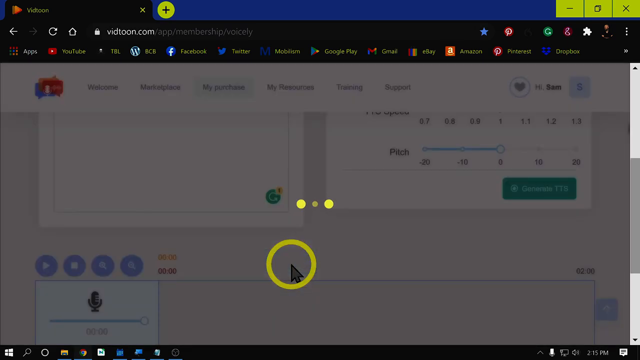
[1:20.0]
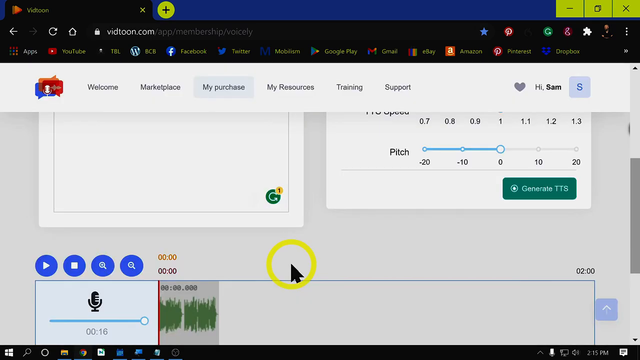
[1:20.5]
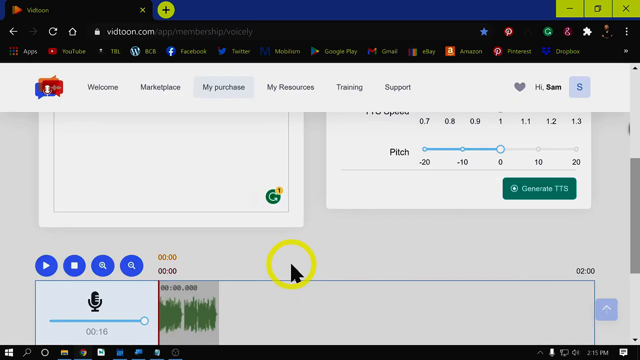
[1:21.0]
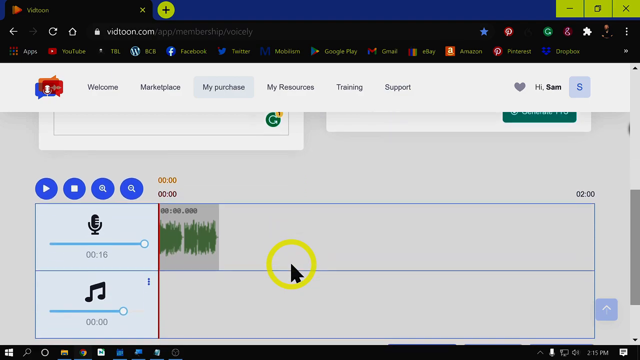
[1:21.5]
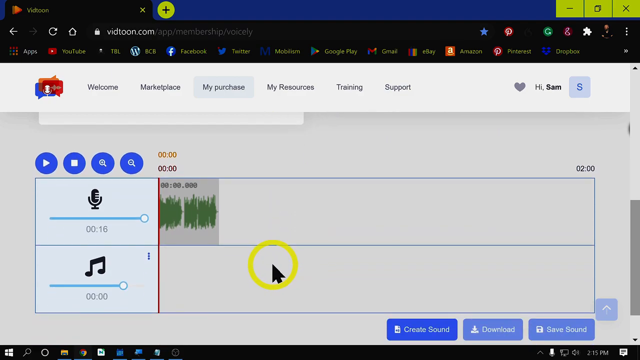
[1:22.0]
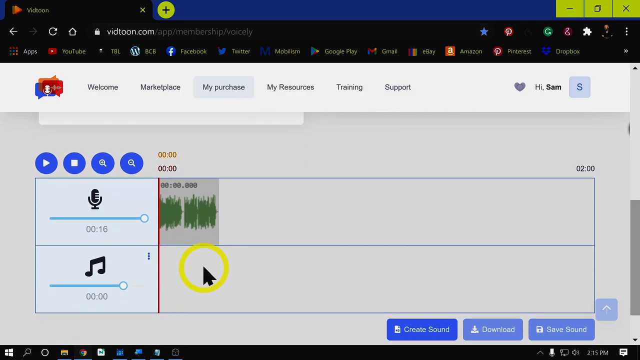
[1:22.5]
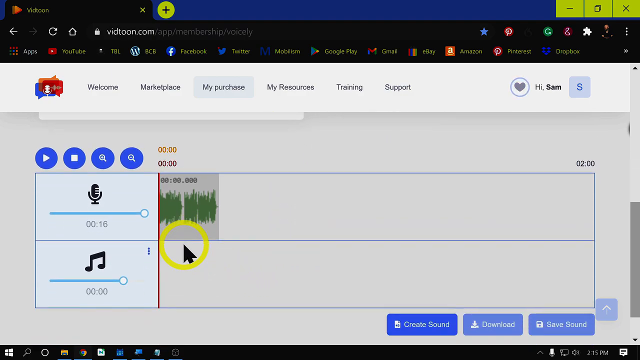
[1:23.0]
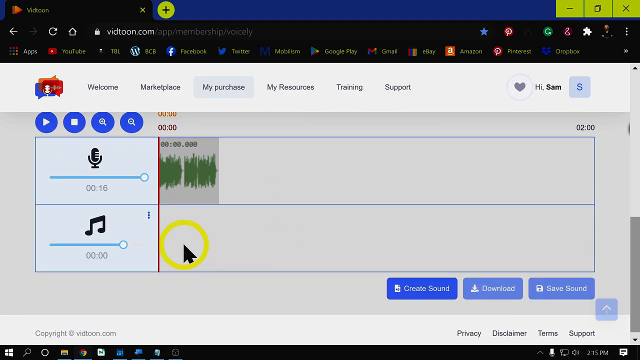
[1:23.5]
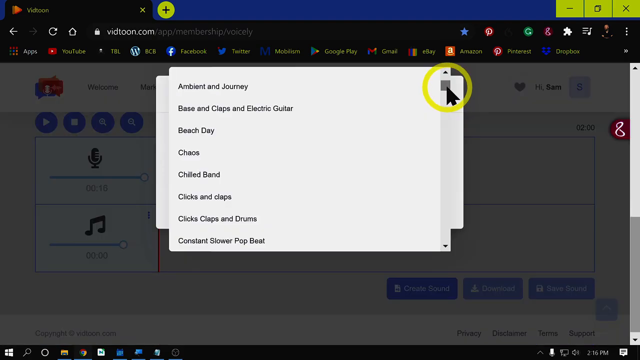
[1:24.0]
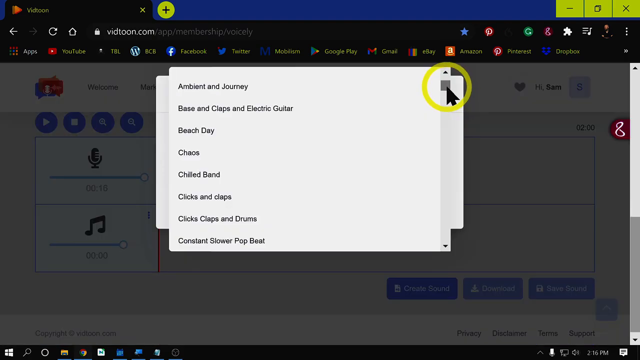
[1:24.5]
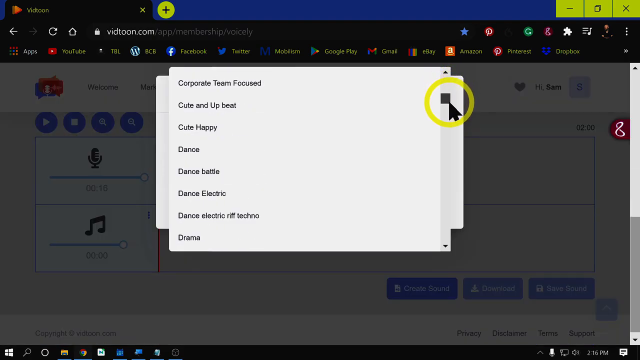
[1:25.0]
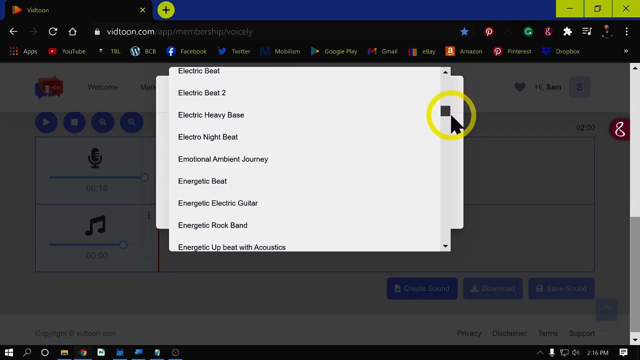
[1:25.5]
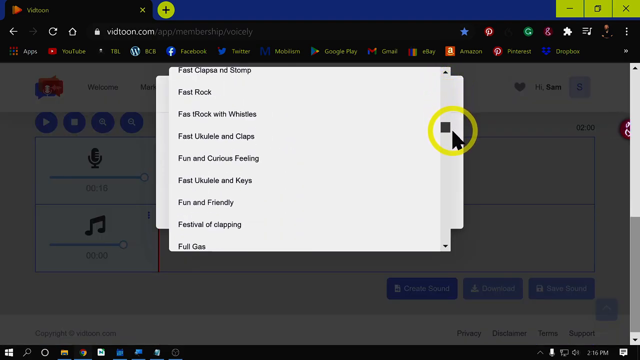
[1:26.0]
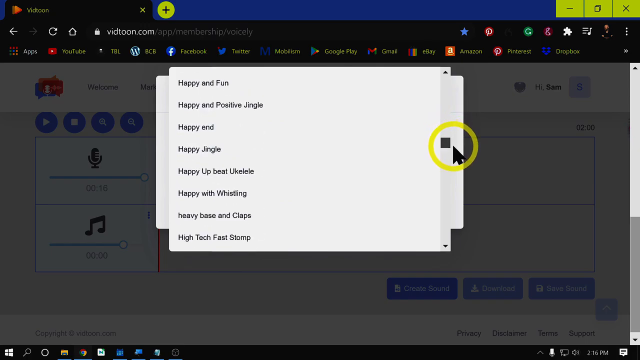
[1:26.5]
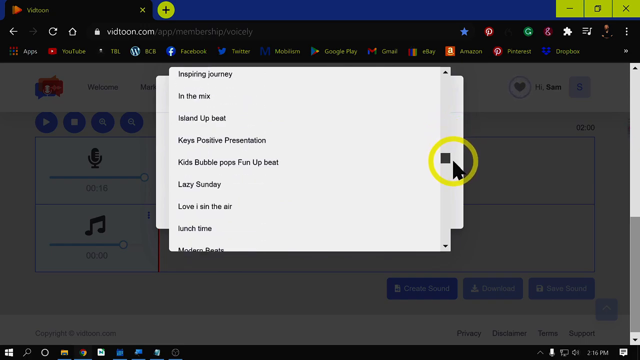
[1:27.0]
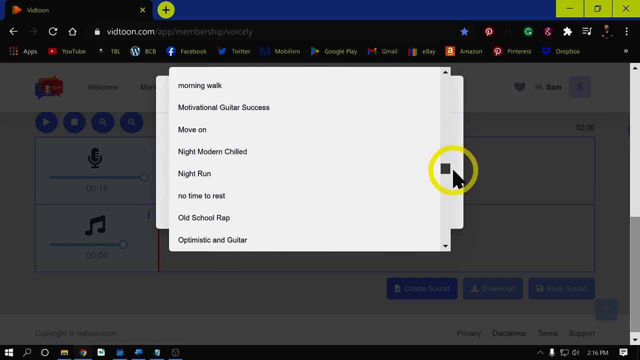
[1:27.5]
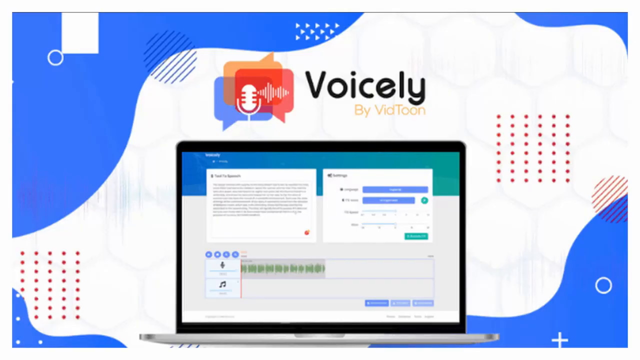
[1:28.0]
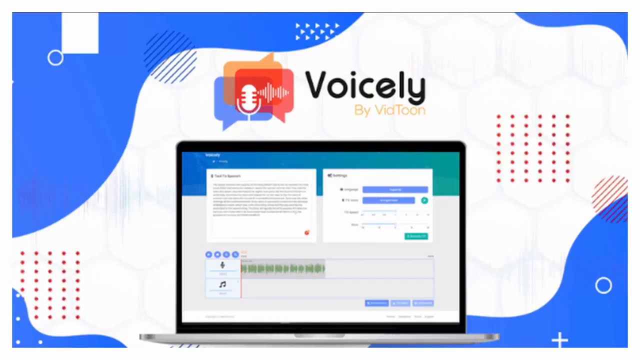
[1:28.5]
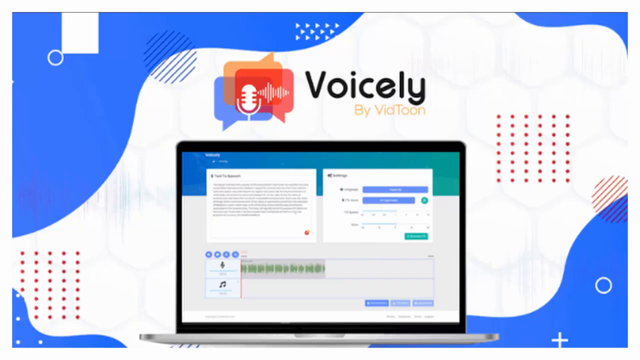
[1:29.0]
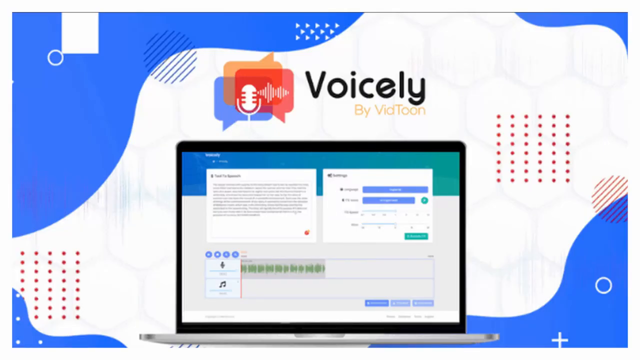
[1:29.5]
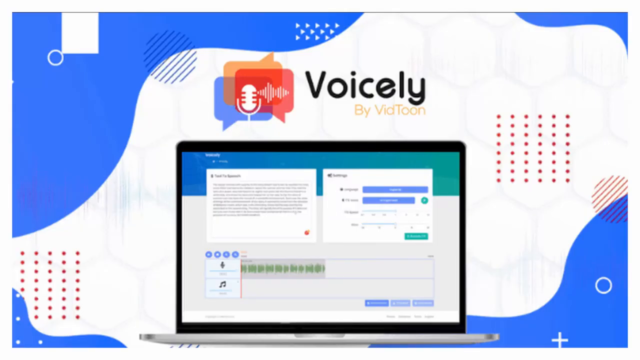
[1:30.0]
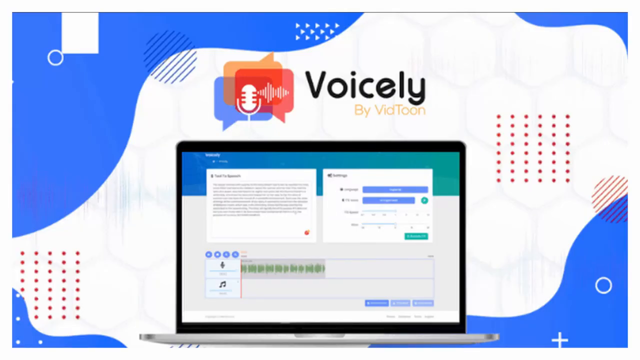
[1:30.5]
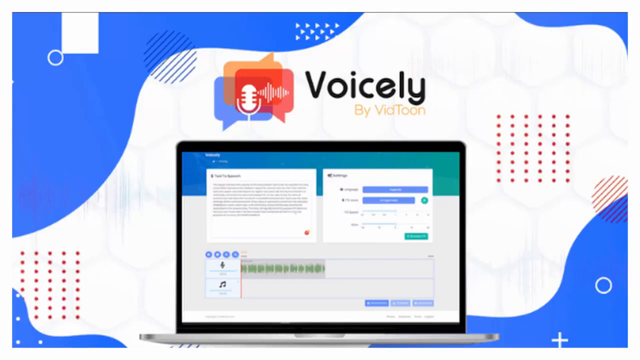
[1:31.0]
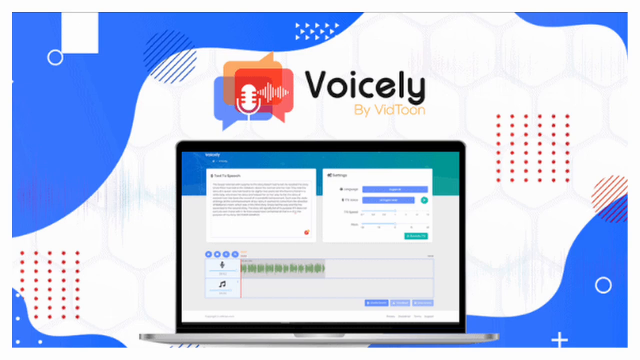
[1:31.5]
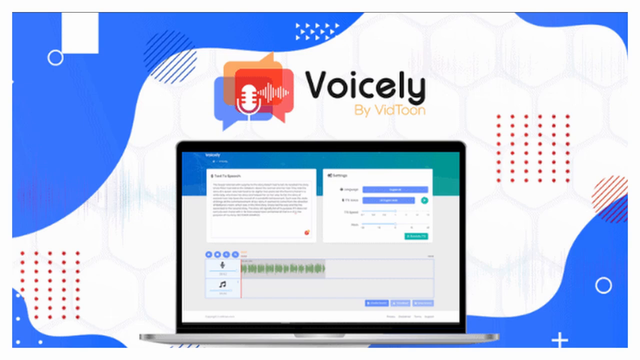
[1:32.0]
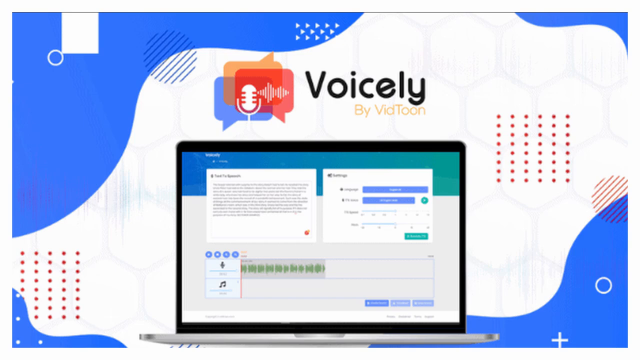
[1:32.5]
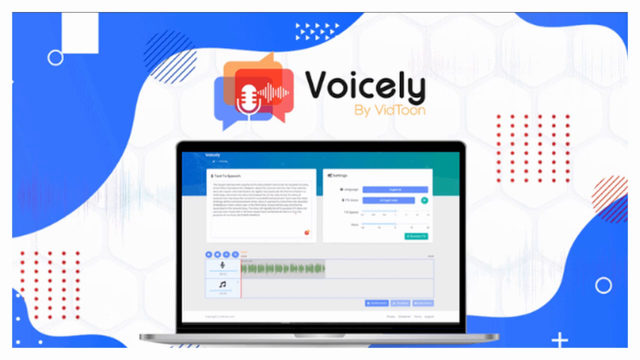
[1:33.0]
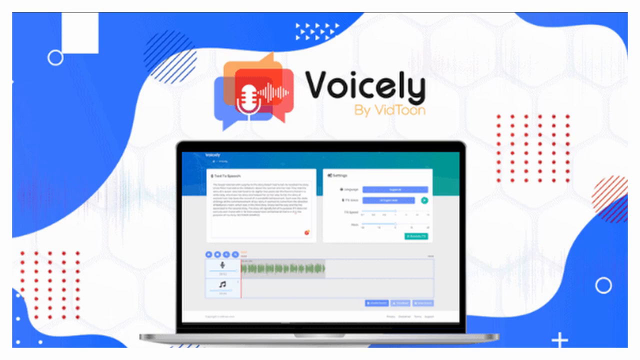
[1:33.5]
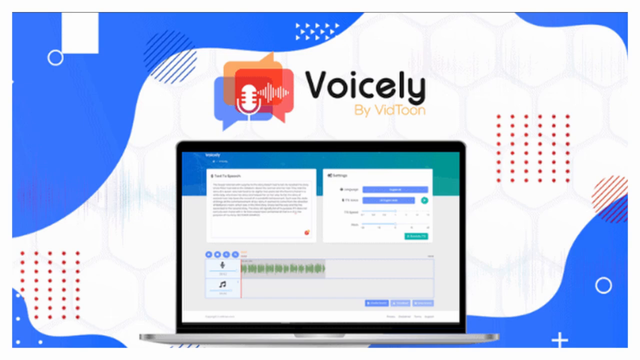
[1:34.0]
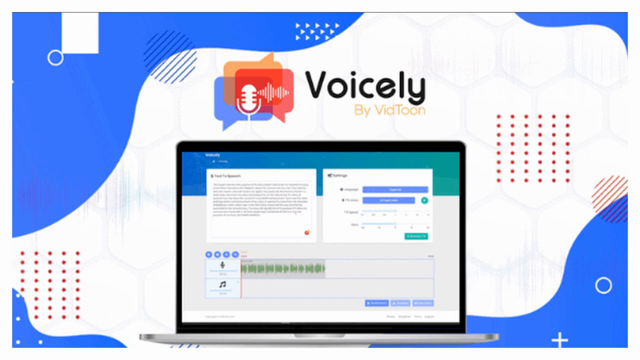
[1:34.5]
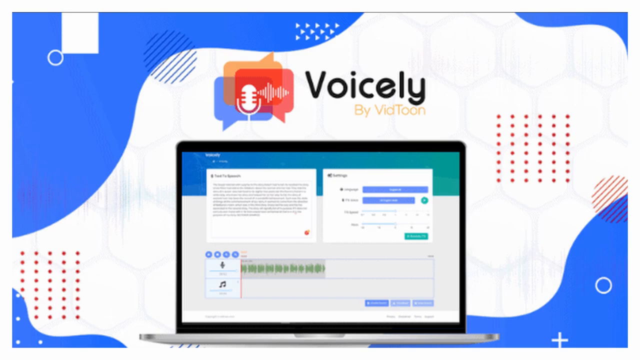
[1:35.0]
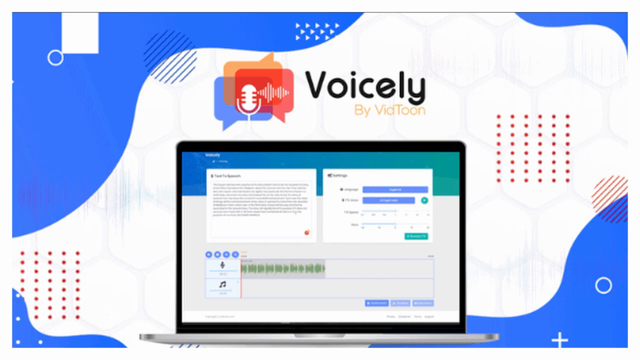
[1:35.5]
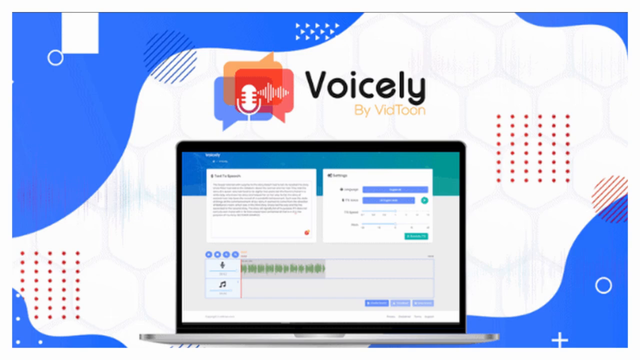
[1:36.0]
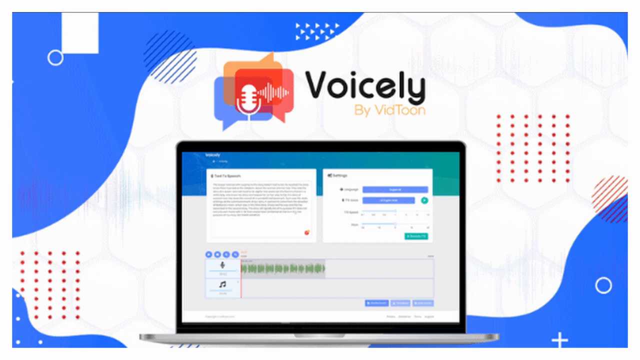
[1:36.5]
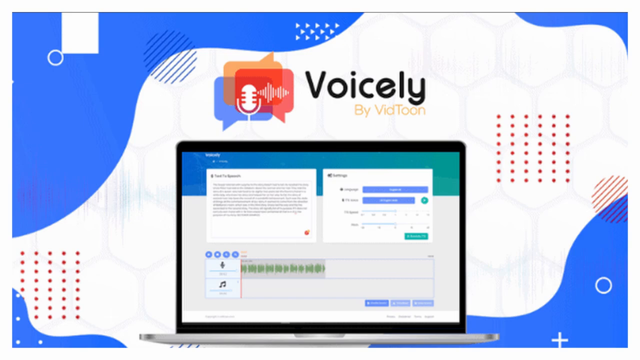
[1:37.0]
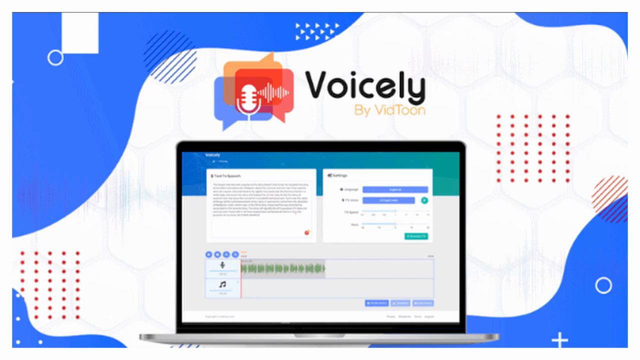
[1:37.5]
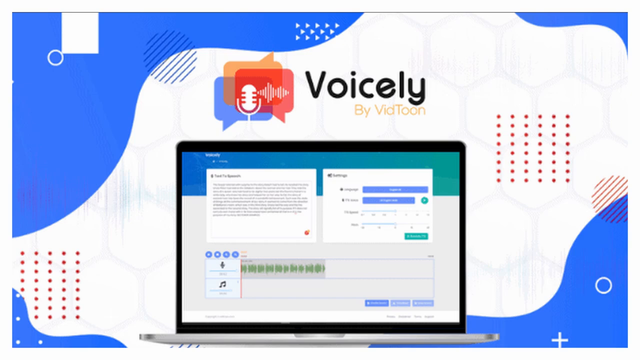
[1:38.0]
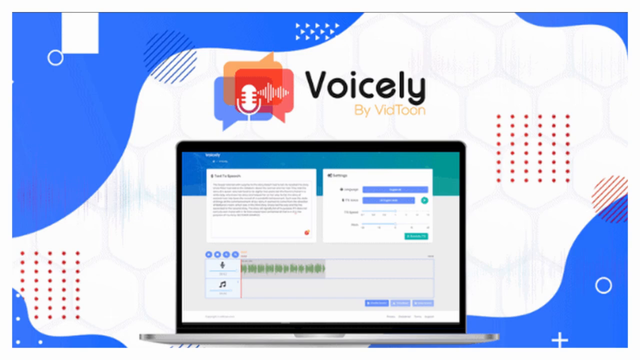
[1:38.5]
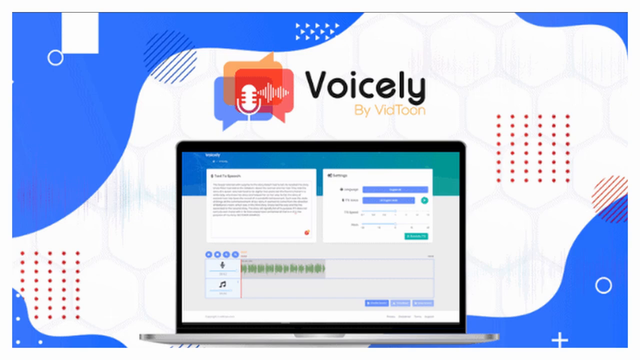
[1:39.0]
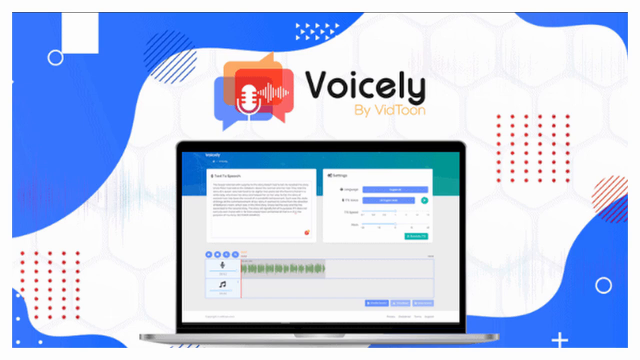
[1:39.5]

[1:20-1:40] Three dots appear while the process apparently goes through. The user then scrolls down the screen, revealing a microphone and a music note with time bars next to them. Next to the microphone there are sound waves, showing that some speech has been recorded. The cursor moves down to hover over the music section and a dropdown menu of music types appears, including ambient and journey, bass and claps and electric guitar, beach day, chaos, chilled band, clicks and claps, clicks, claps and drums, and constant slower pop beat. Scrolling down reveals many more options, including dance electric, drama, electric beat, fast rock, and happy and fun, scrolling too fast for all of them to be read.